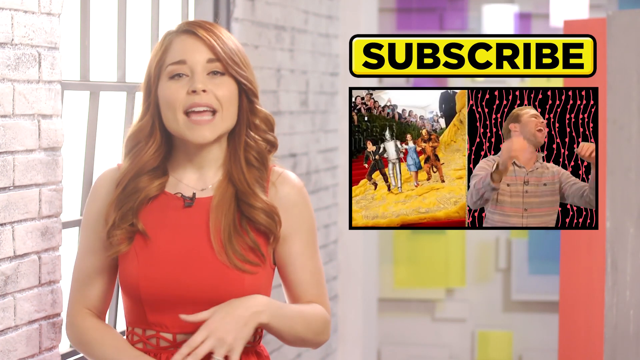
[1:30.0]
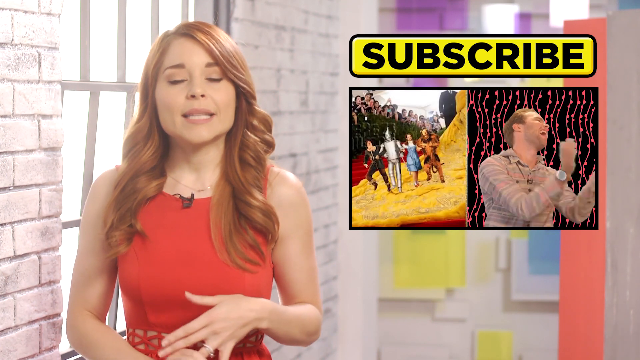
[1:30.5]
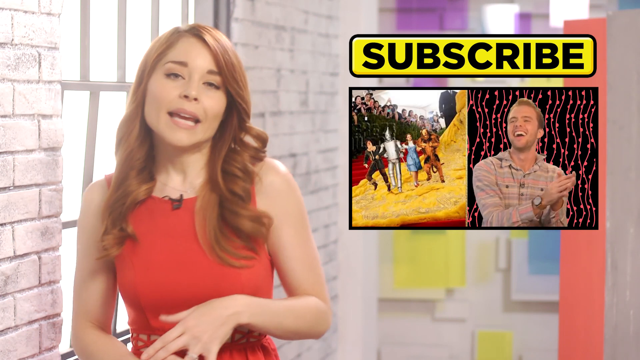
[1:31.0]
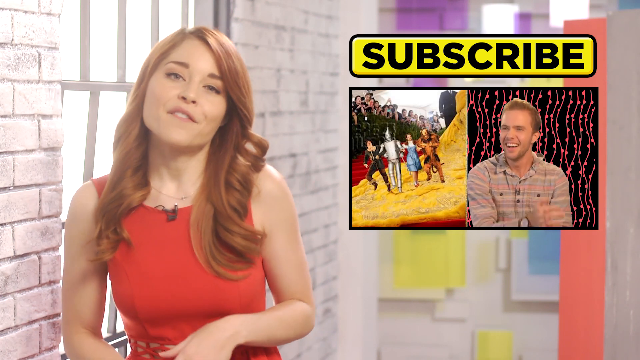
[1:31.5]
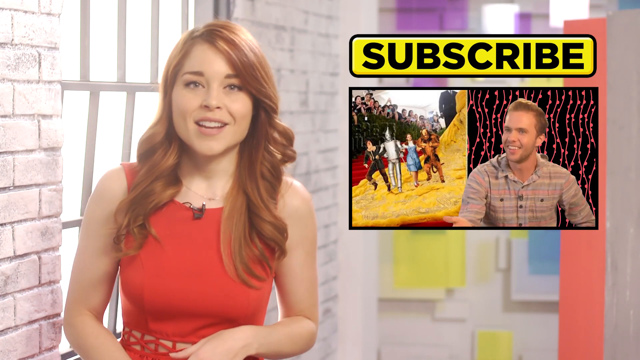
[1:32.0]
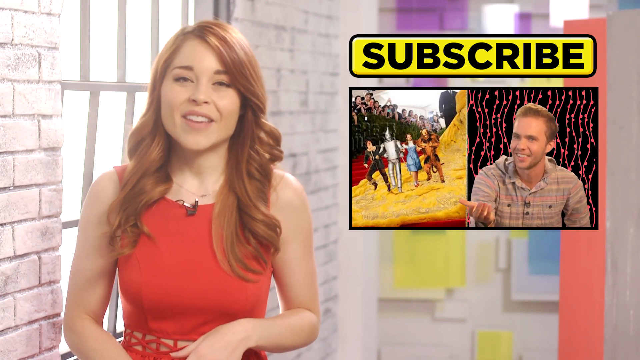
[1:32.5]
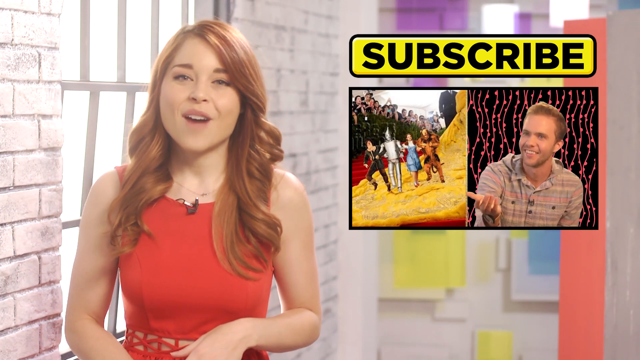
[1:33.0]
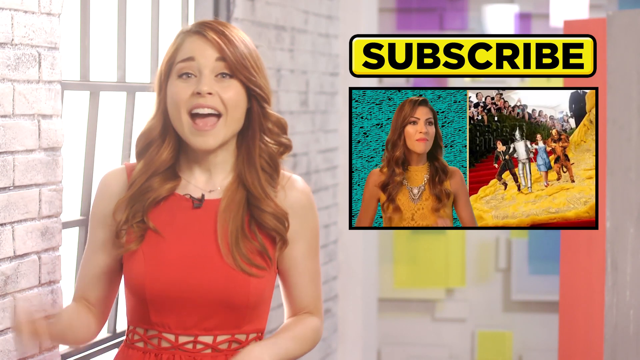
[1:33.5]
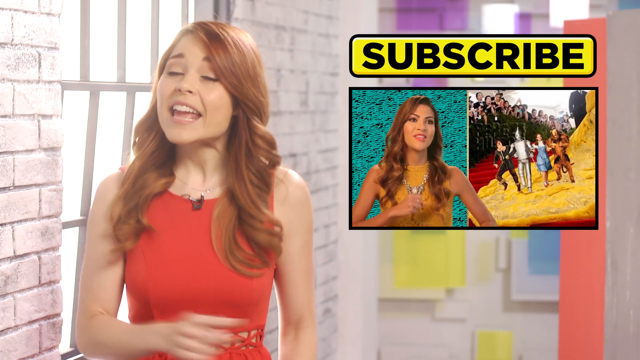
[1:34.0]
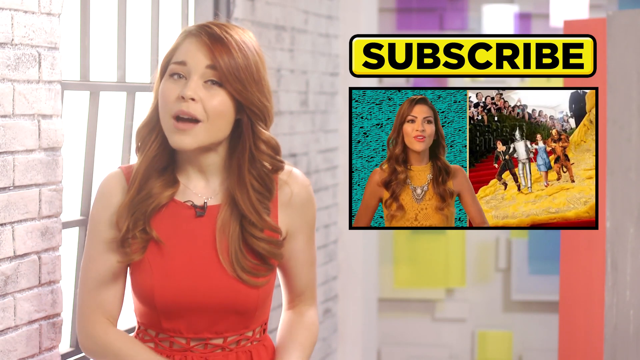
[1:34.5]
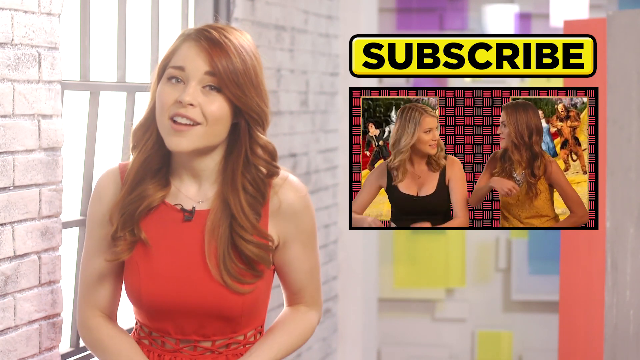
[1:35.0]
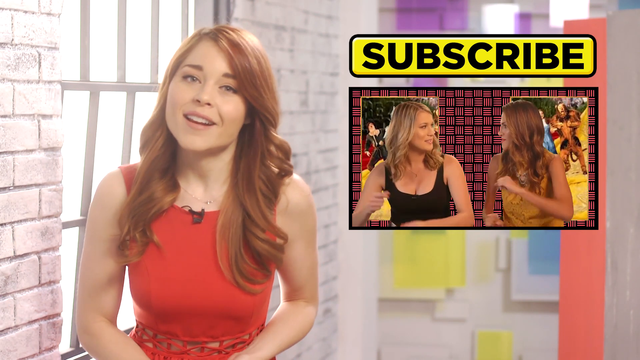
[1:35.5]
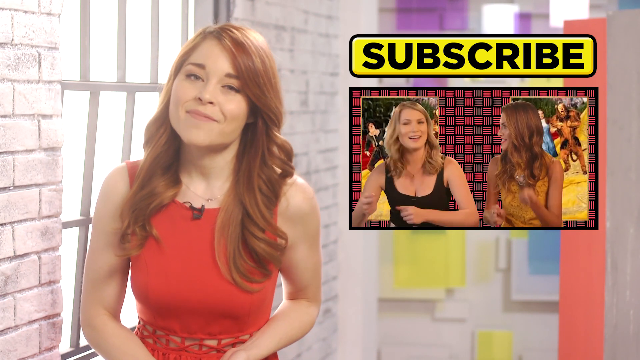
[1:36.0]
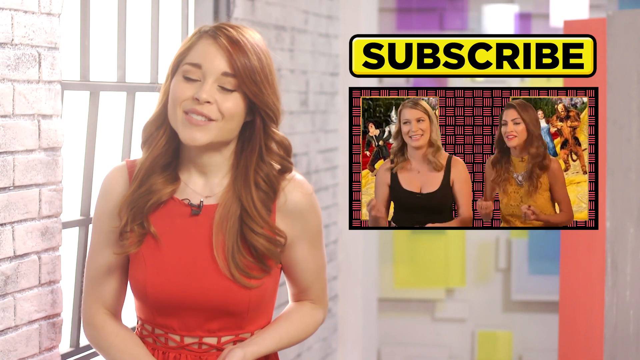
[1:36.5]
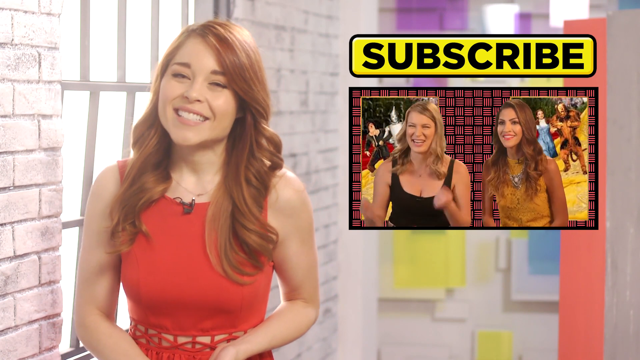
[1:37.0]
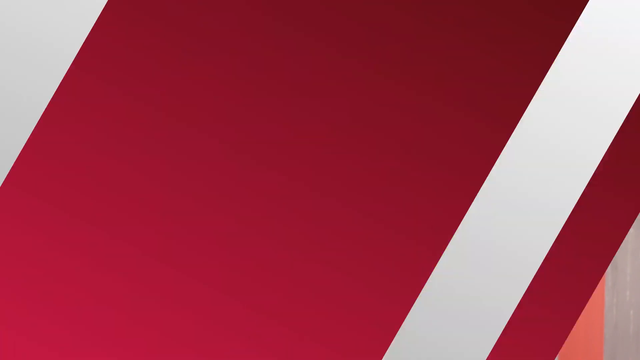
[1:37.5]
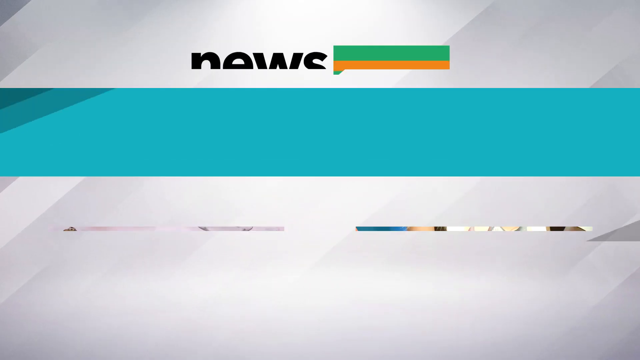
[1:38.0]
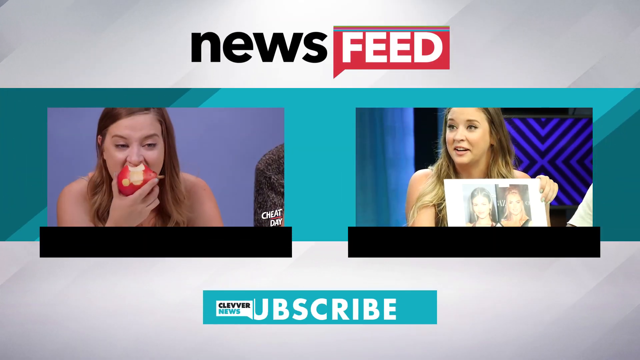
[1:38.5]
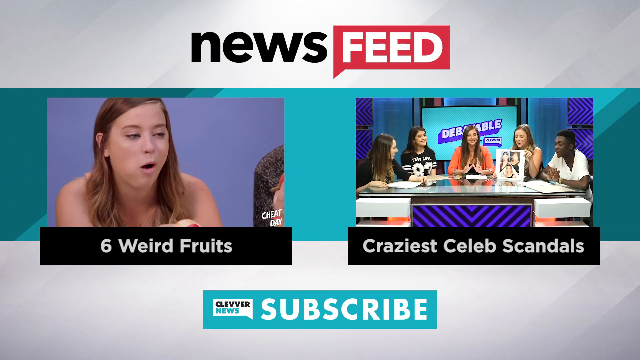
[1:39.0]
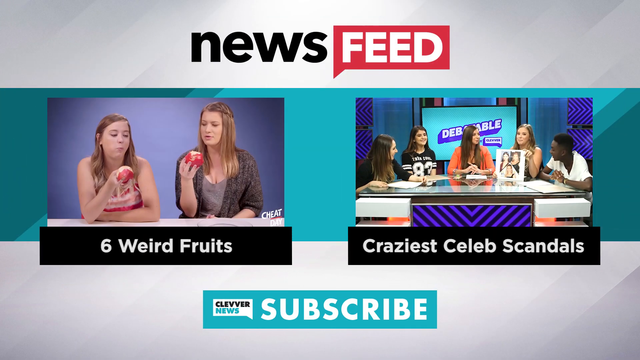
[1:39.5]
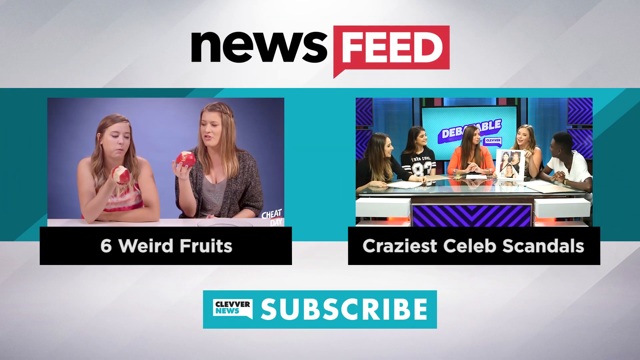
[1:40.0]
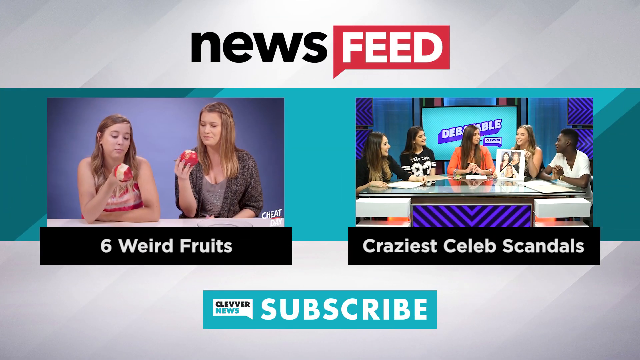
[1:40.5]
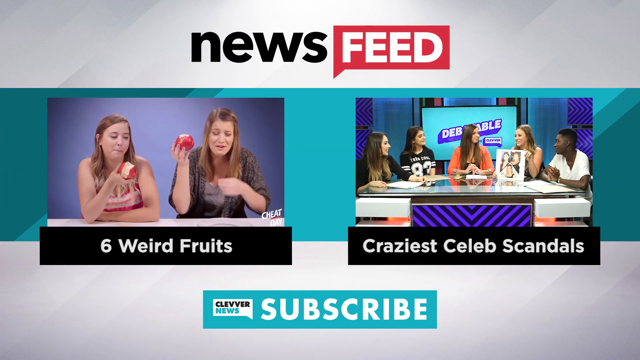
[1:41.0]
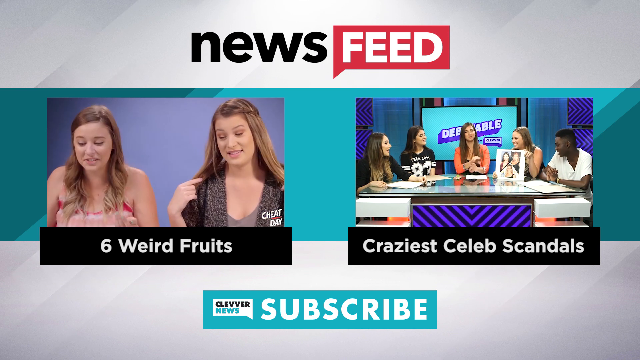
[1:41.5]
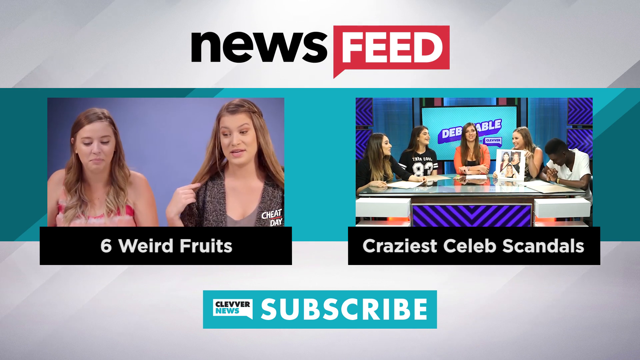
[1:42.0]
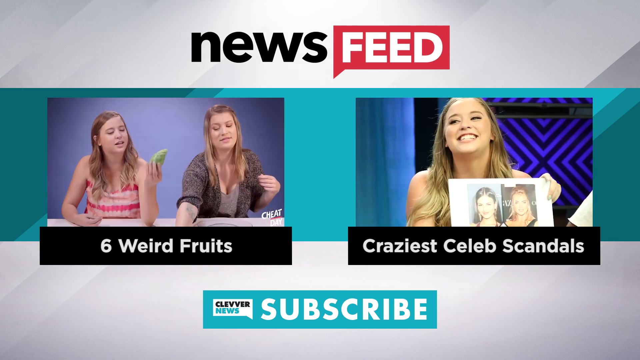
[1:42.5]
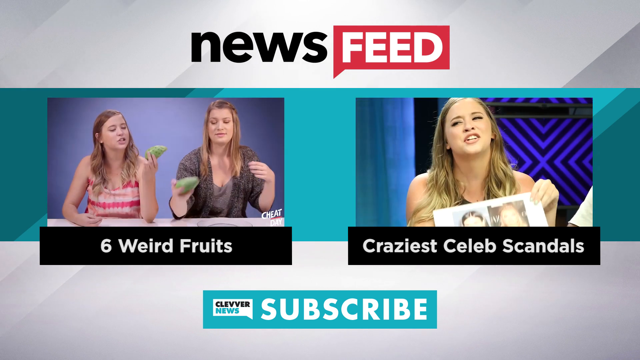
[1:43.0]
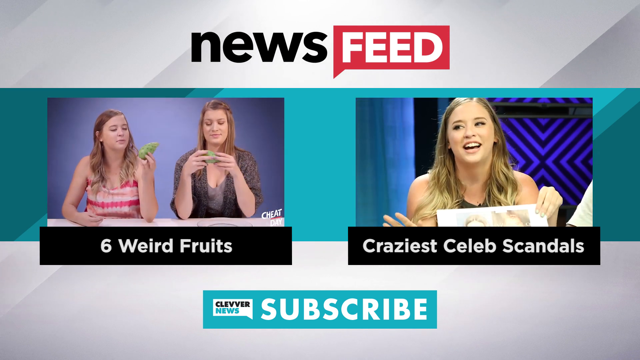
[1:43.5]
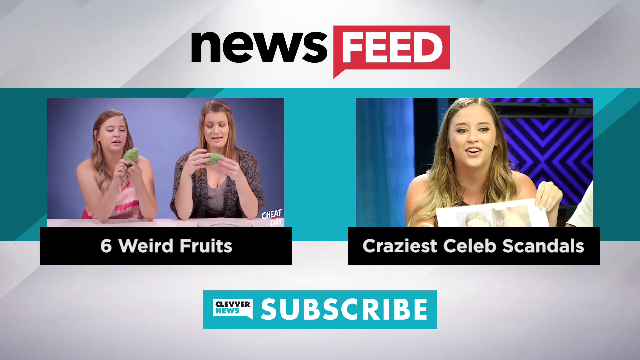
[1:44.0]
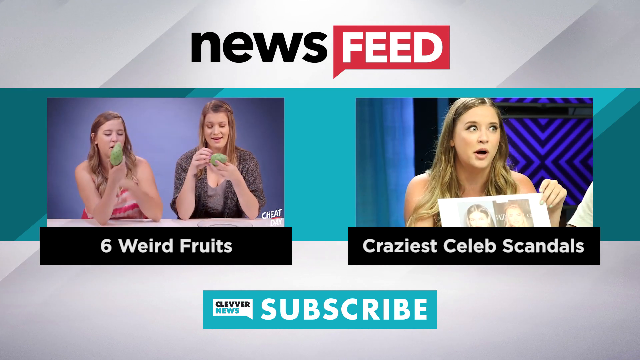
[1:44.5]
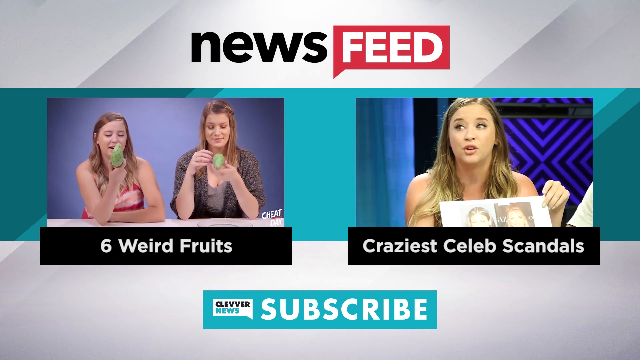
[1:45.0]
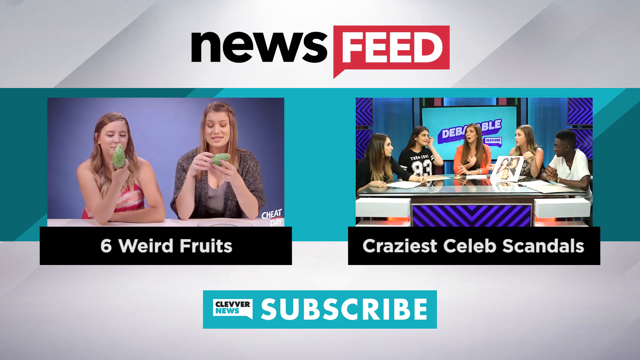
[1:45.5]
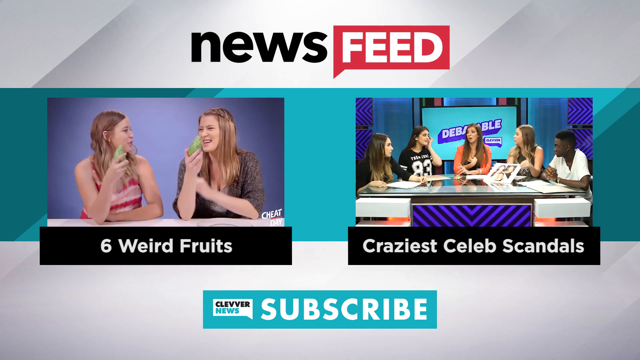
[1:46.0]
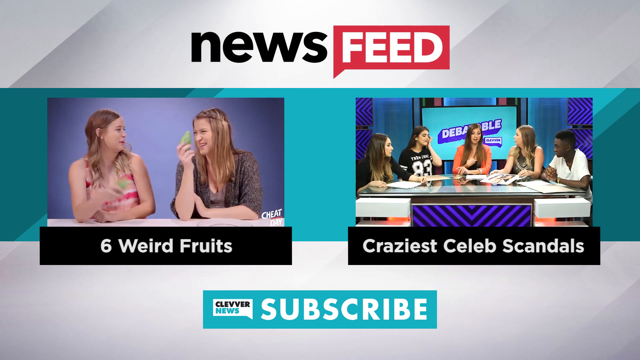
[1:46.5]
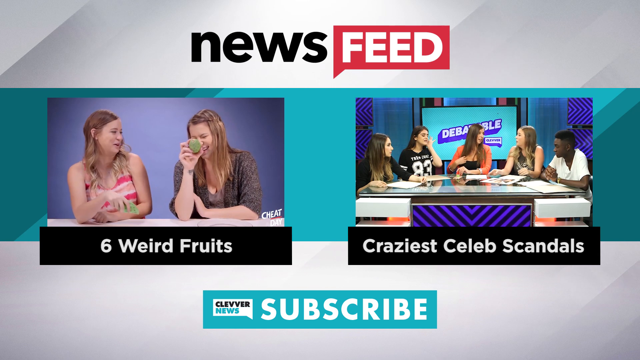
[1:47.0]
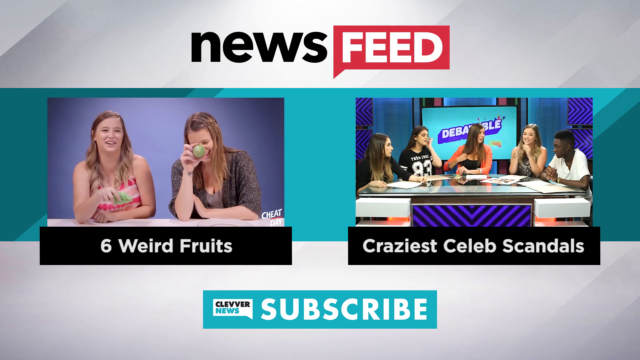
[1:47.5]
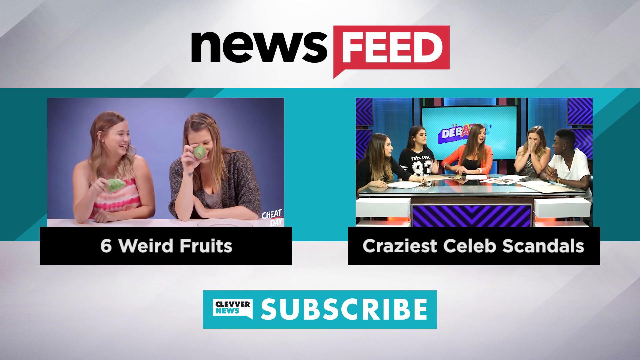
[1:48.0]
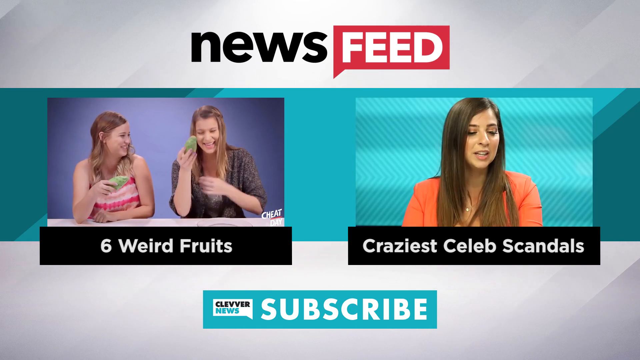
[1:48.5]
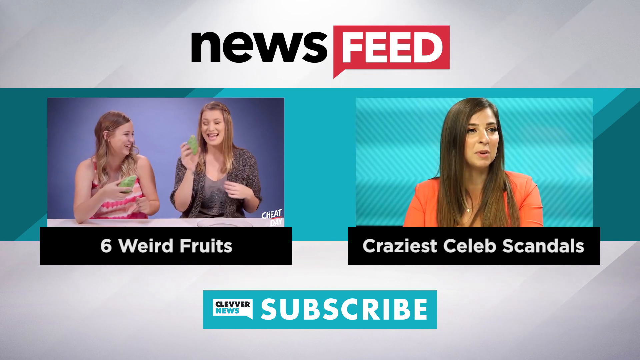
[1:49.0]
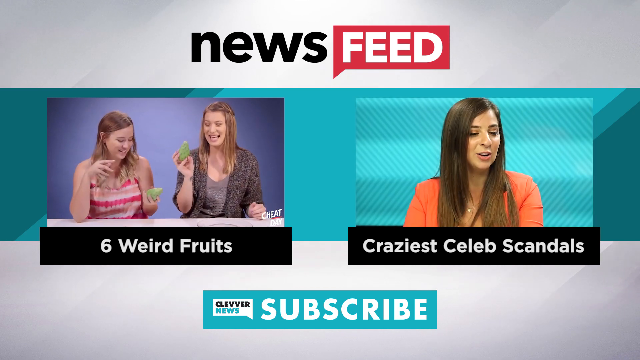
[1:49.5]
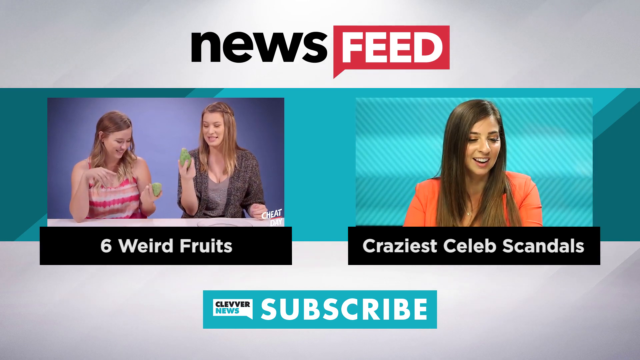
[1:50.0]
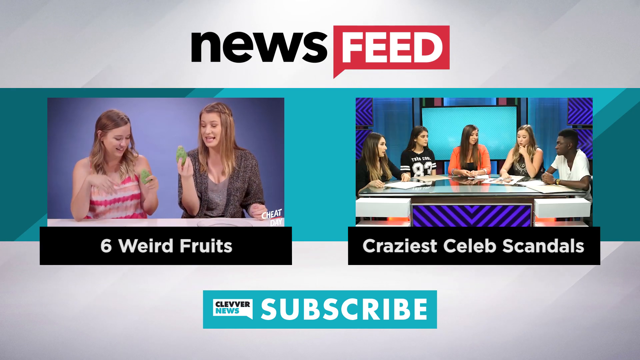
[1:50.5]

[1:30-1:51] The news reporter in the orange dress appears with a picture or video displayed next to her, topped by text in black reading "subscribe". Below it, a small video shows a man in a light brown jersey with a watch on his right hand, against a dark background with pink things hanging on top. The man is laughing. The video under "subscribe" changes to the same picture of a lady in a long yellow dress, with cartoons walking on the grass. On the left side, a lady in a yellow top and a necklace, with long brown hair, is shown against a blue background with a few black spots. Close to the end of the video, different people are shown laughing. It then changes to two pictures or videos: in the first, two individuals are eating an apple against a blue background; the next shows a group of people talking, with a TV screen behind them and a column below the screen reading "subscribe".